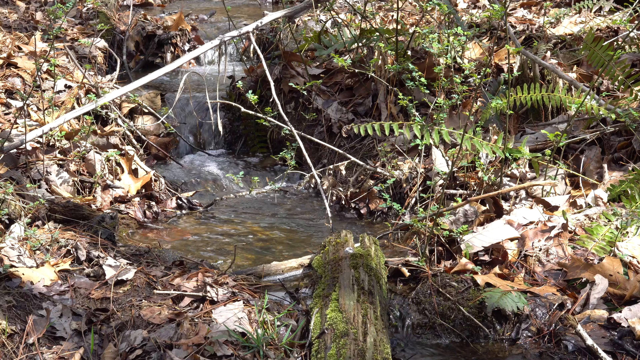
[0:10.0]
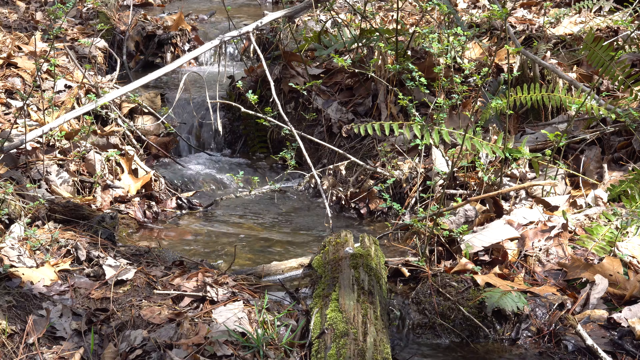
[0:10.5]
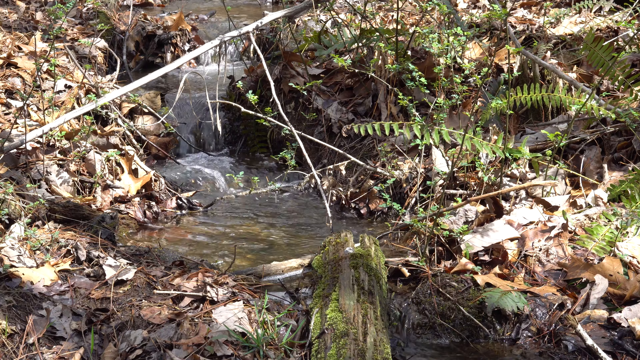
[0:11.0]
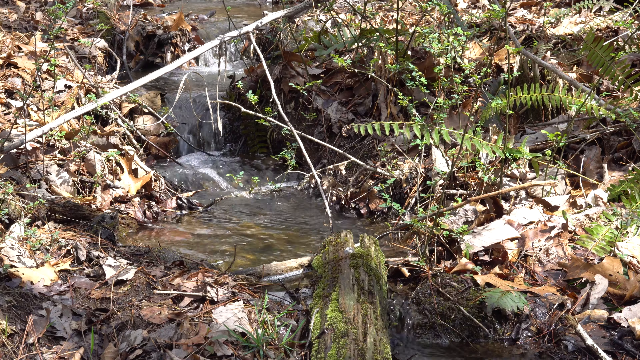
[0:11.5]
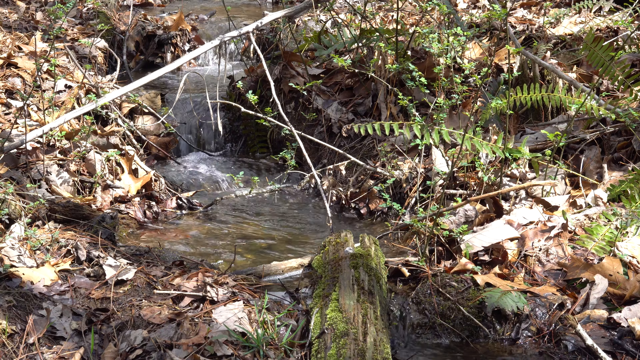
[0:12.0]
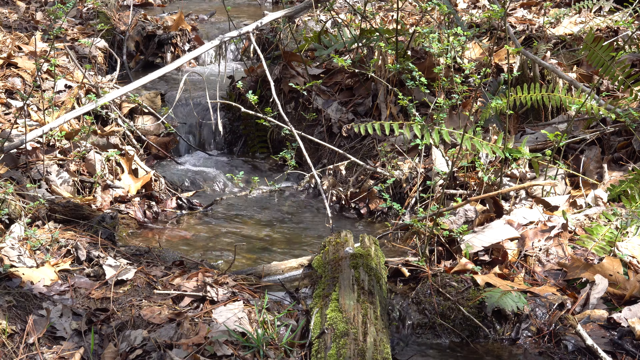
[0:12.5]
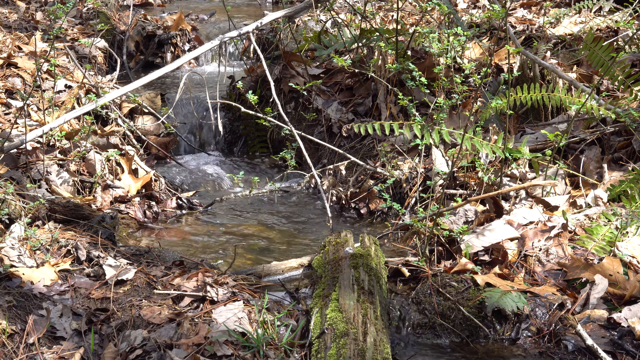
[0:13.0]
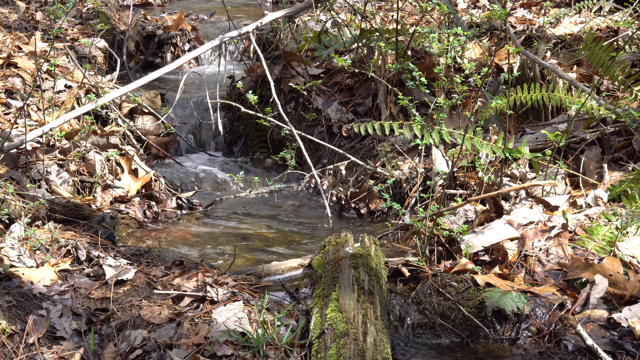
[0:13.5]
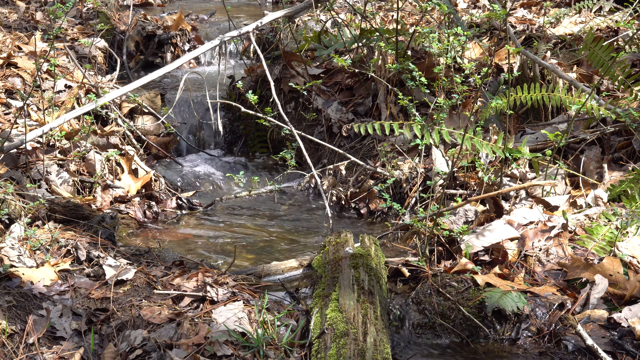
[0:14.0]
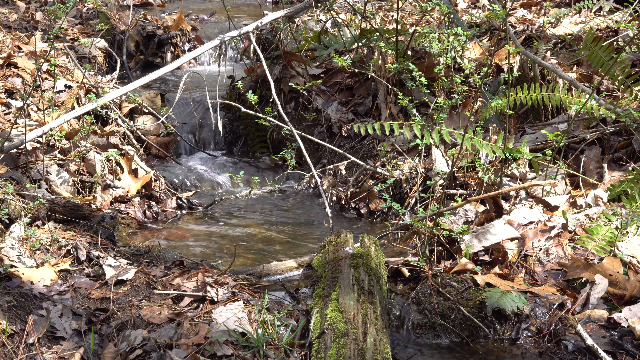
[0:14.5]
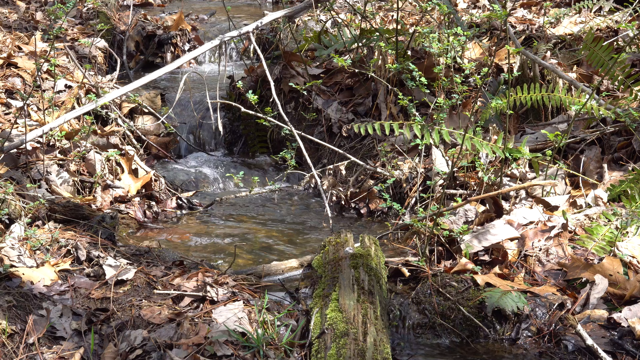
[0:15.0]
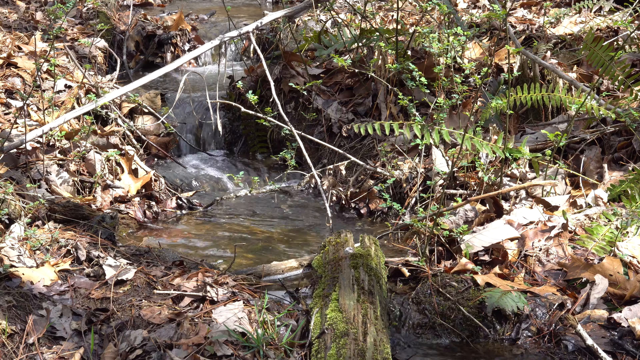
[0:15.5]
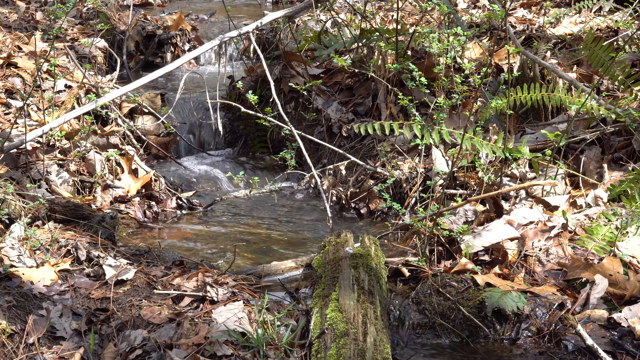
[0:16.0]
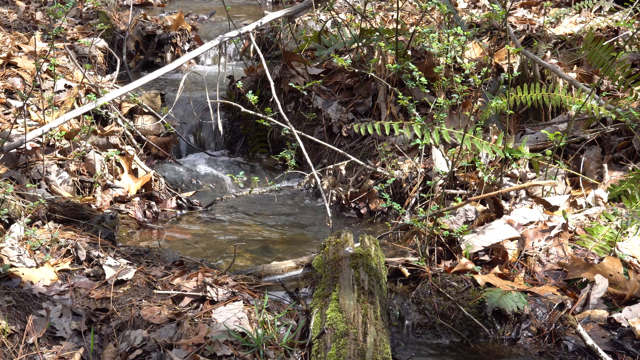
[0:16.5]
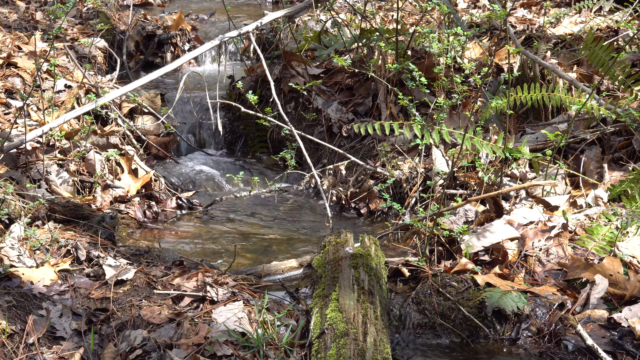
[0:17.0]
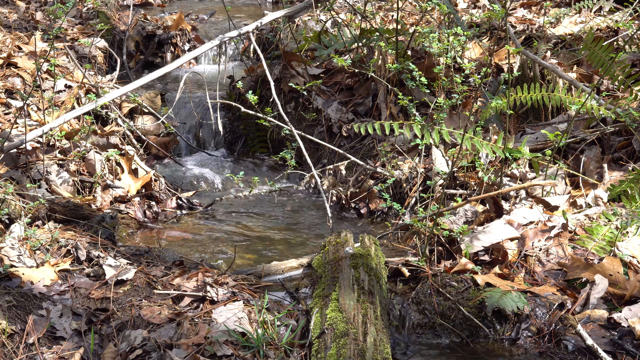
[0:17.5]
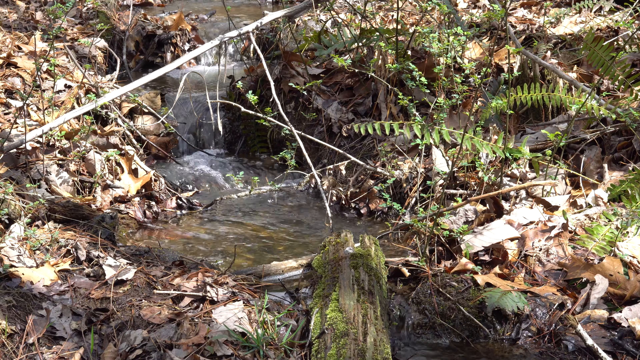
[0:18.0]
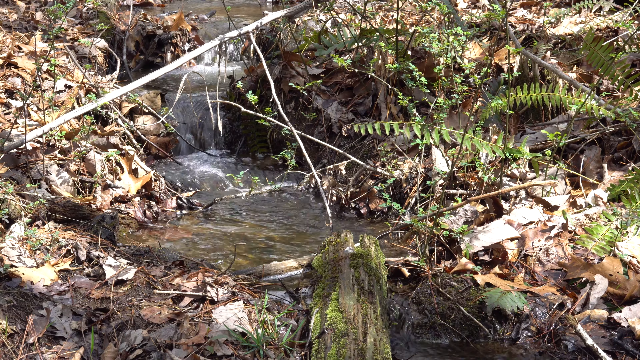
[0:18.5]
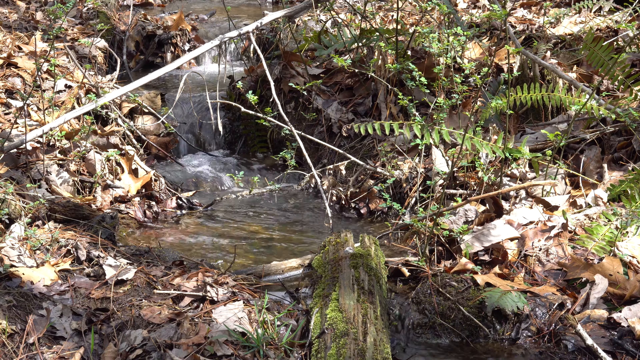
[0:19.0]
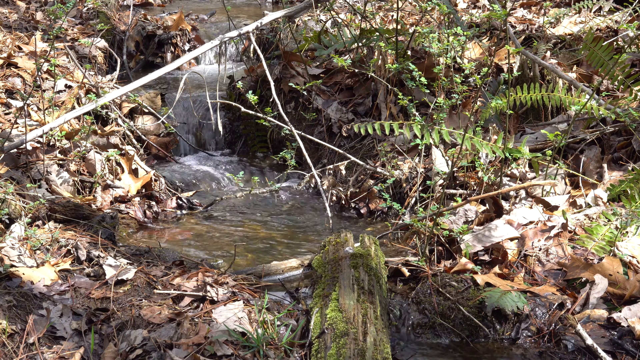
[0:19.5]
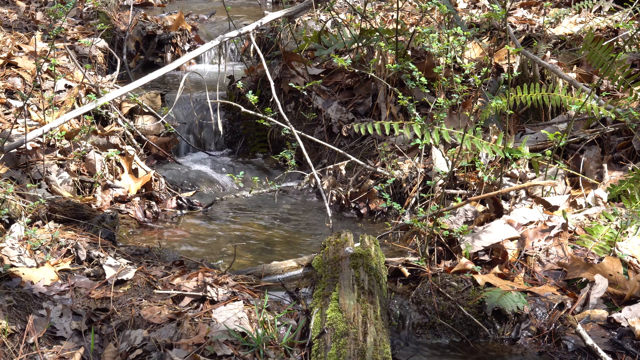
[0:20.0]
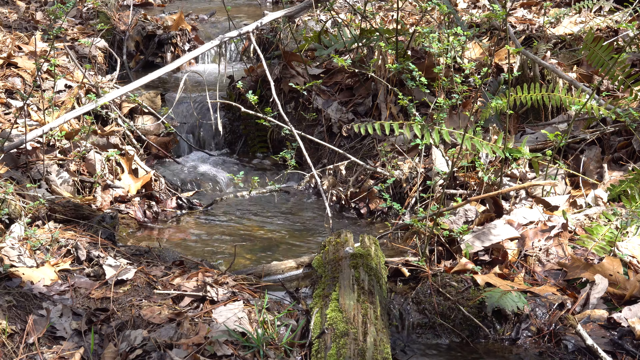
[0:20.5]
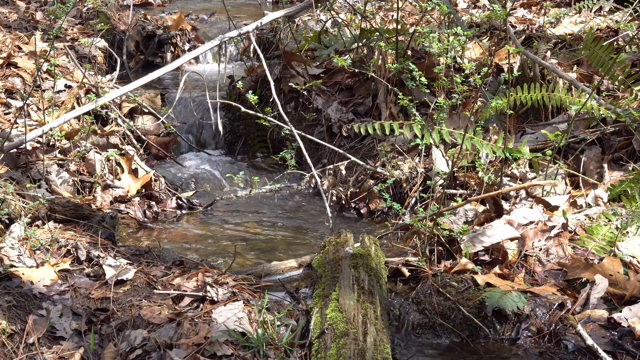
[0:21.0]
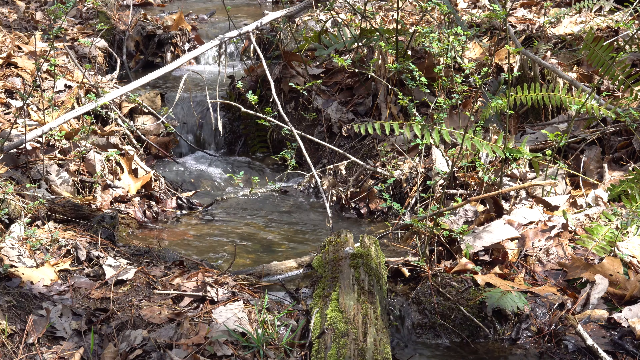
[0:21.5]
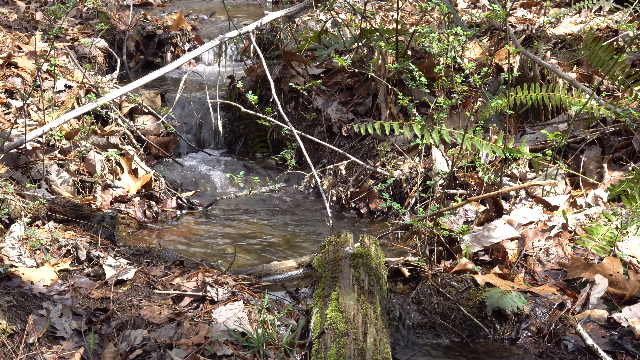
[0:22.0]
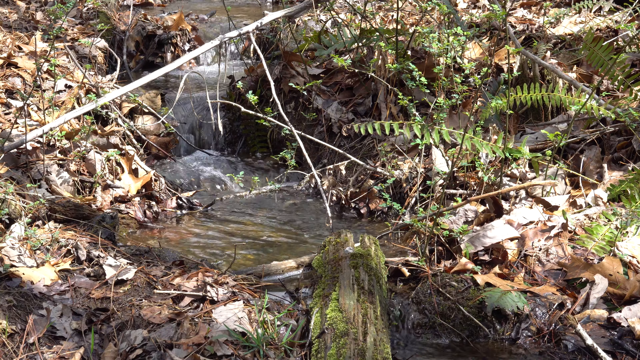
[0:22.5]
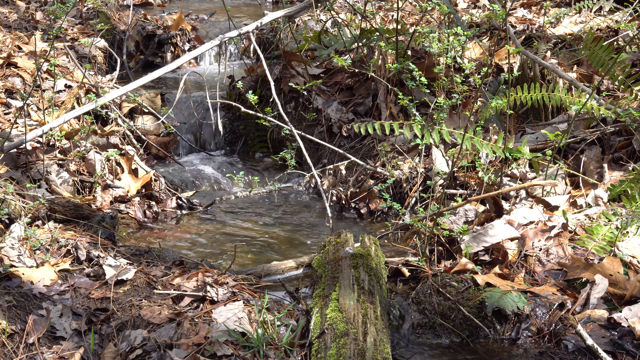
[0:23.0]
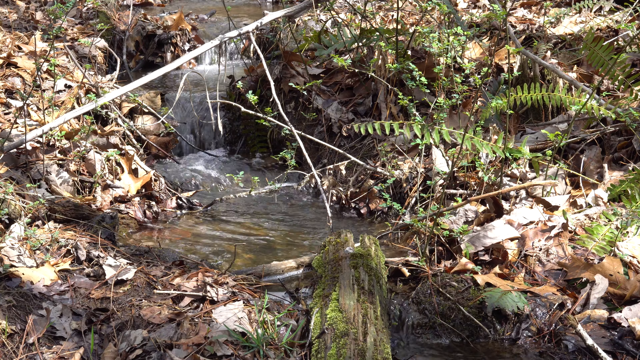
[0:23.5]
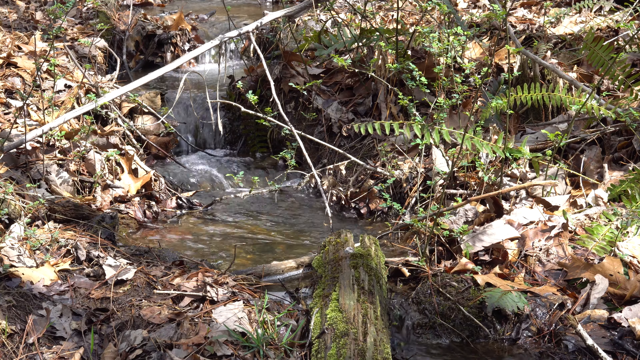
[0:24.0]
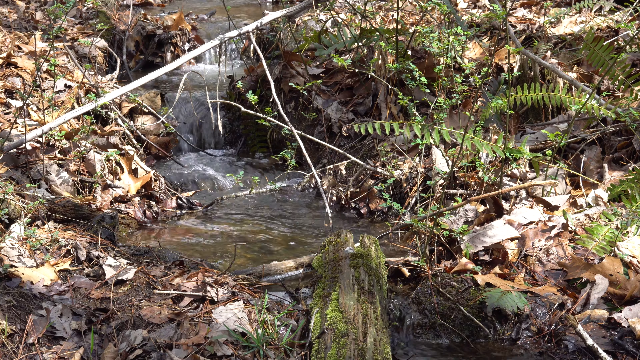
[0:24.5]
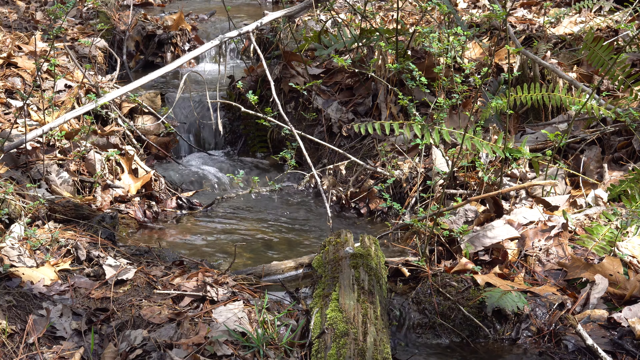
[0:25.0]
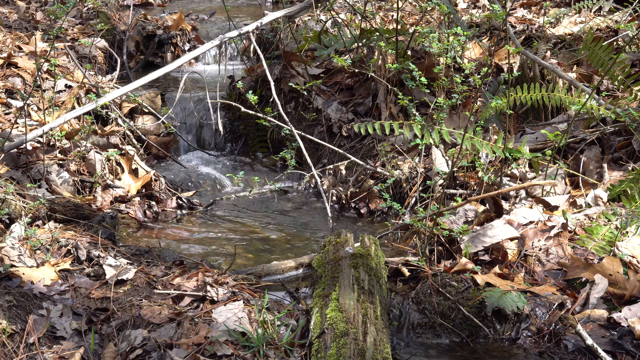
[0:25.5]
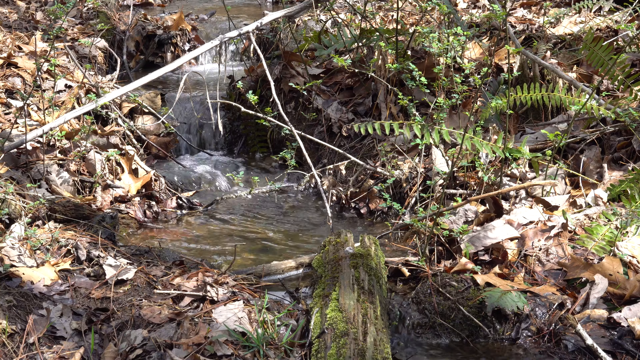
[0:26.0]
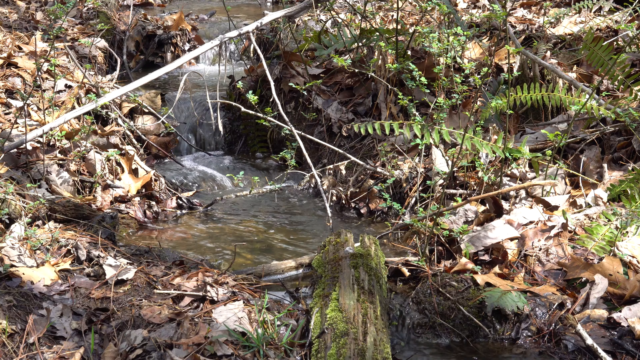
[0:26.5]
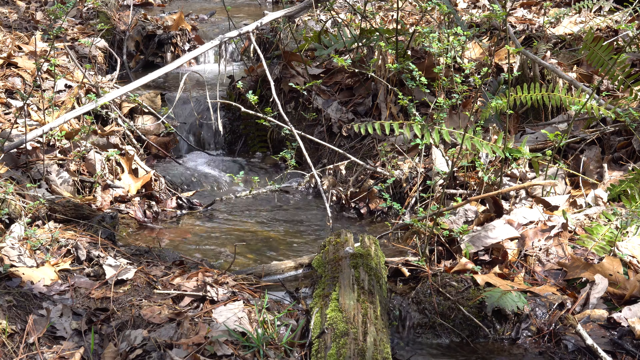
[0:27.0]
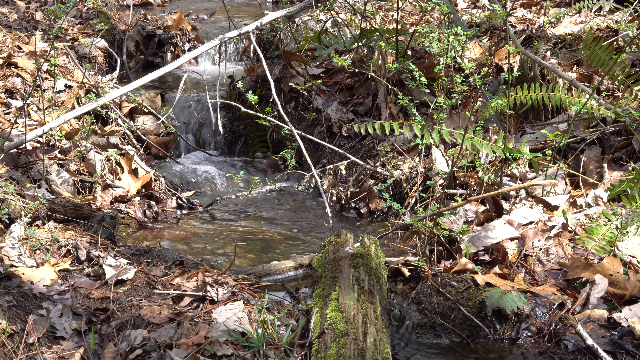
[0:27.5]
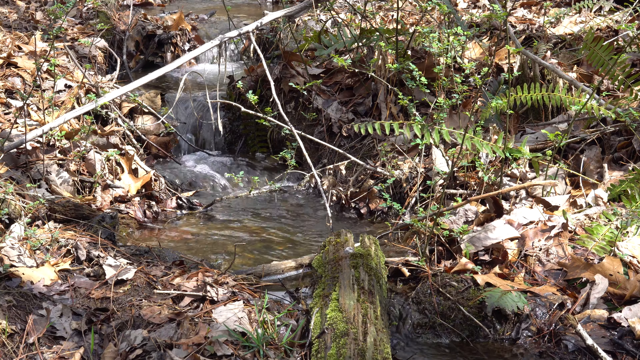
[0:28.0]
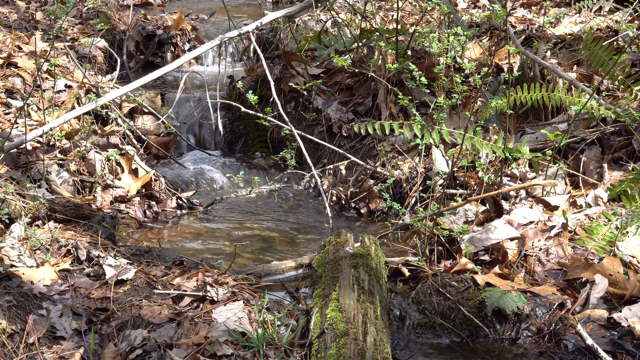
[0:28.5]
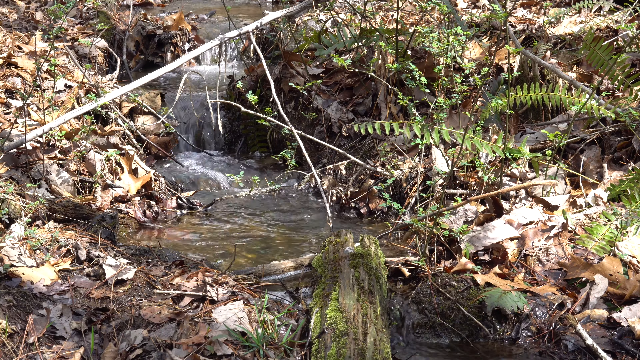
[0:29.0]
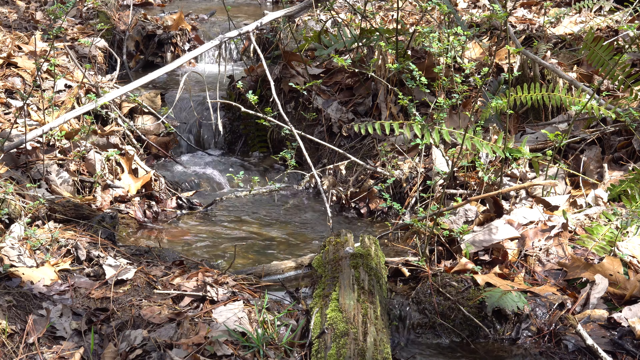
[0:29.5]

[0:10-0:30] The waterfall scene continues with little change. The water drops in several places: it drops a little at the top, streams down, drops again, then makes its way over and slides down. A big log with green plant life growing in it is at the middle part of the bottom of the frame; only part of it is visible, and its end is not seen.